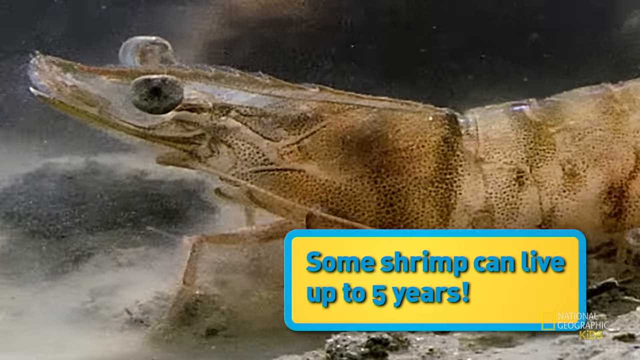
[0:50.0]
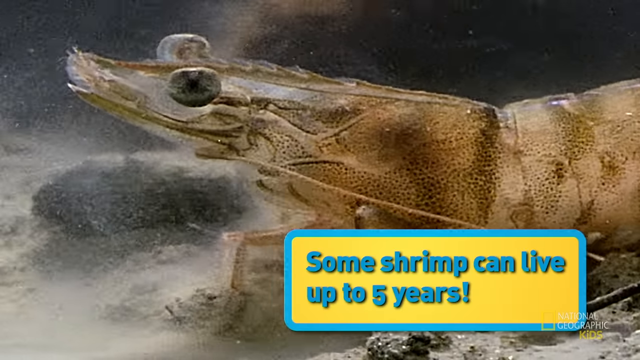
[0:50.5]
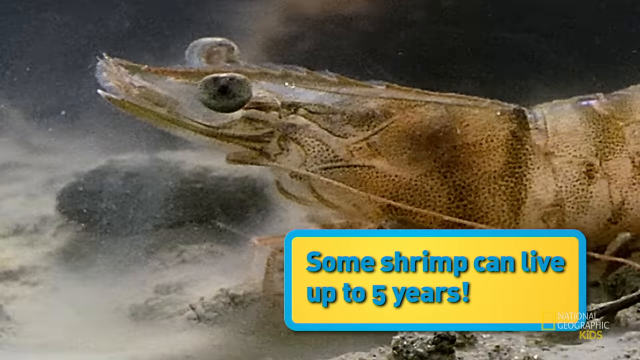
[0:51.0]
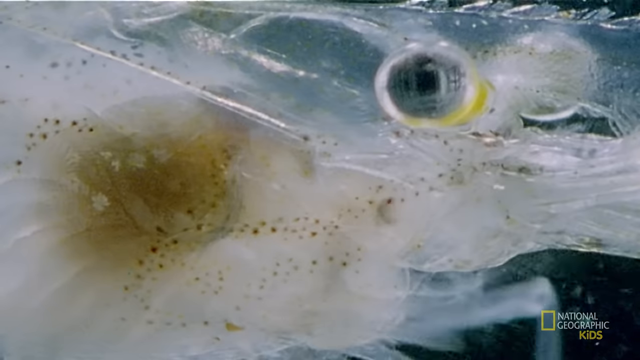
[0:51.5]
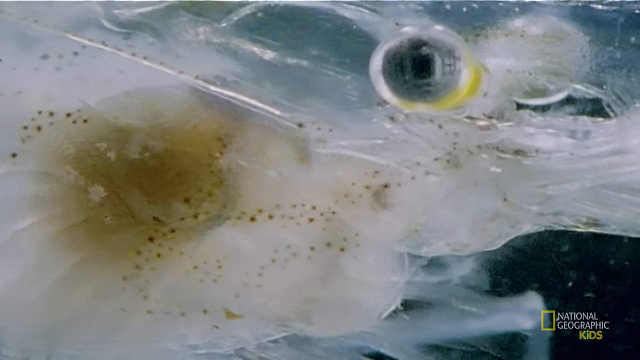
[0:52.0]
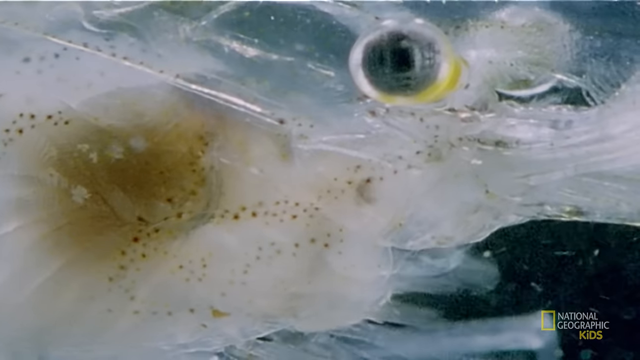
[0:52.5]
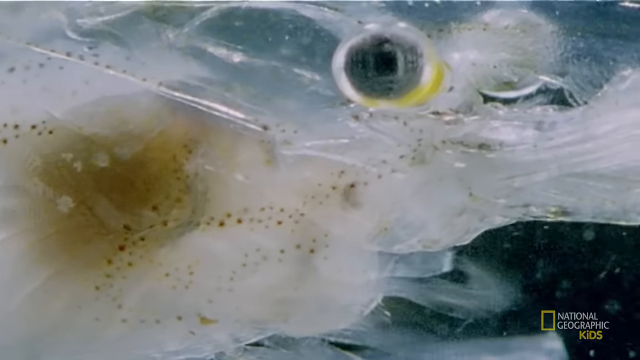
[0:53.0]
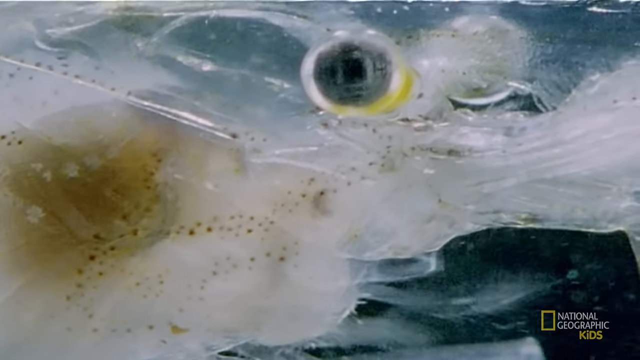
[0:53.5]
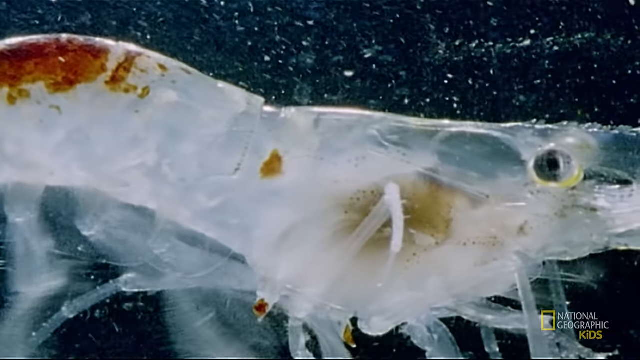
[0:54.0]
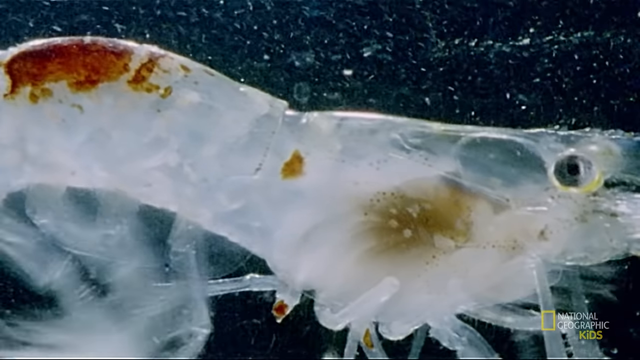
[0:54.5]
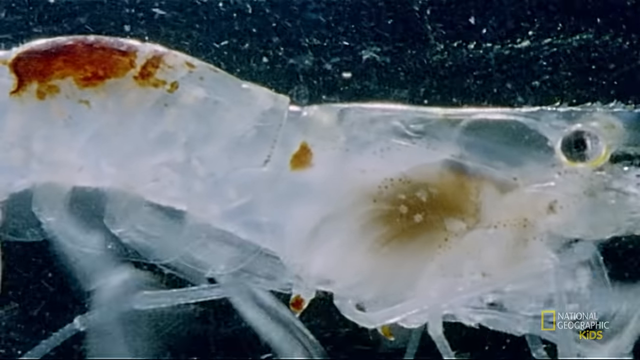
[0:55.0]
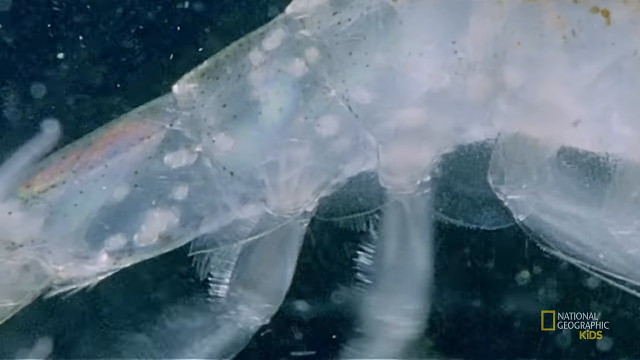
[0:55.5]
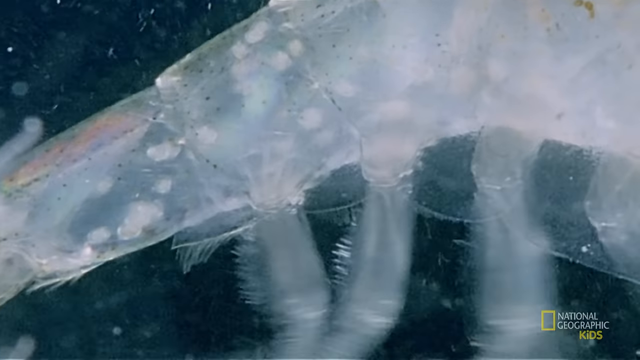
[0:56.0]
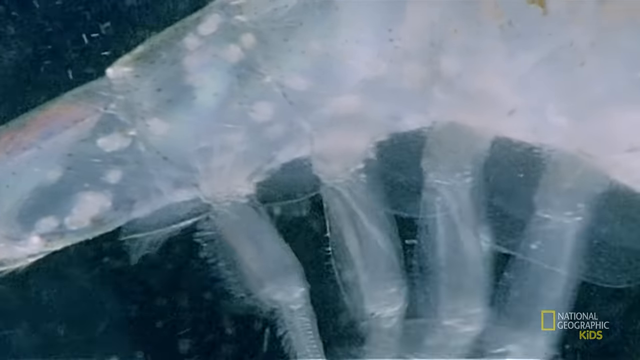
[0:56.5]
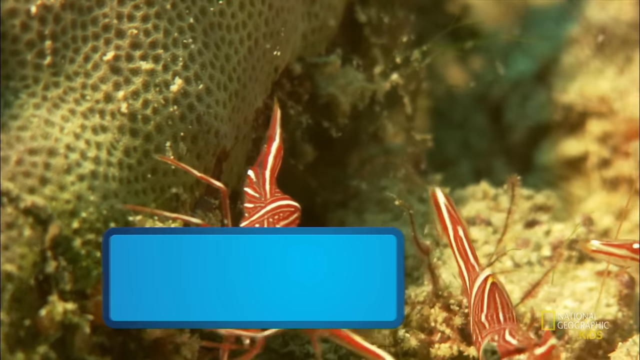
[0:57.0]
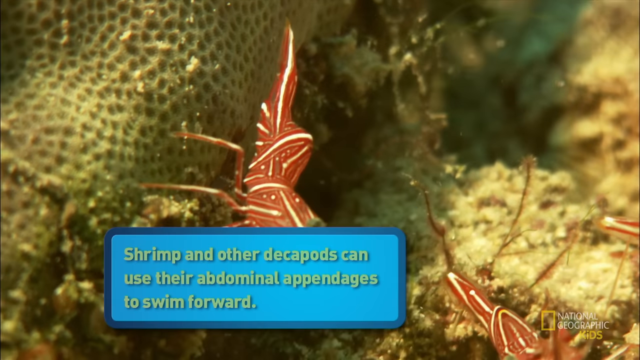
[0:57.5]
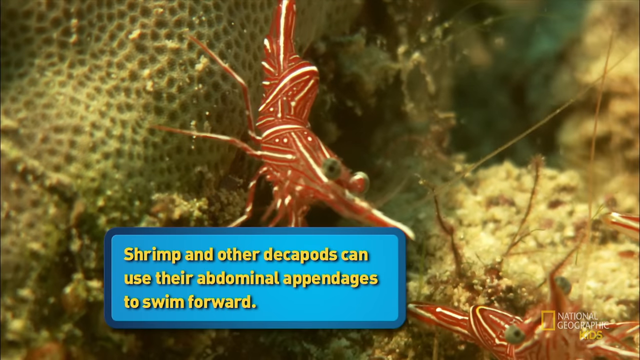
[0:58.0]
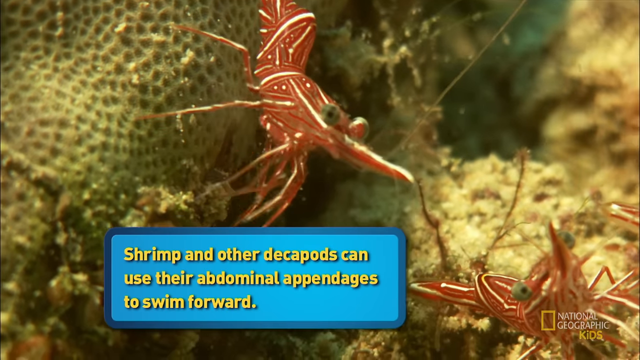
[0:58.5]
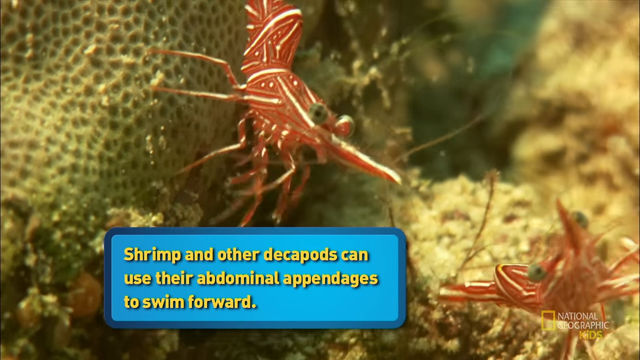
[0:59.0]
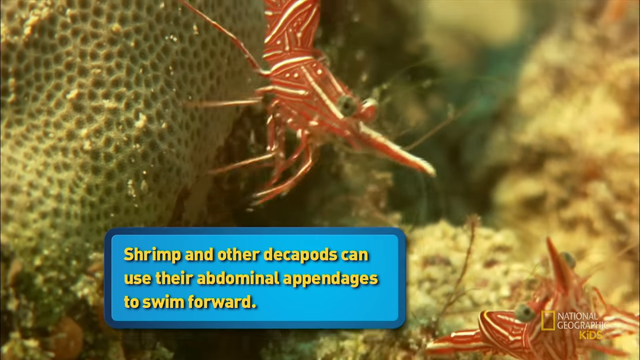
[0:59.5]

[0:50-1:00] A translucent shrimp with little black specks moves its legs rapidly in the water. Its legs are very long; it seems to have at least eight legs on each side on the bottom and another four in the front. Its eyes are black and its body is see-through. Two orange crustacean-looking sea creatures, possibly a different type of shrimp, walk rapidly along the ocean floor with their legs moving quickly. They are lobster-colored orange with white stripes and little white dots on their surface, and they are not translucent. Their eyes are black dots set in a brown capsule.